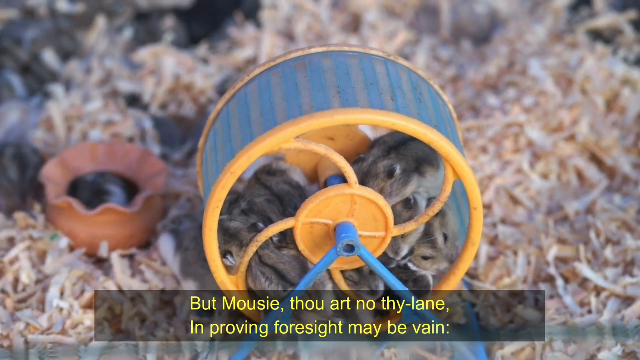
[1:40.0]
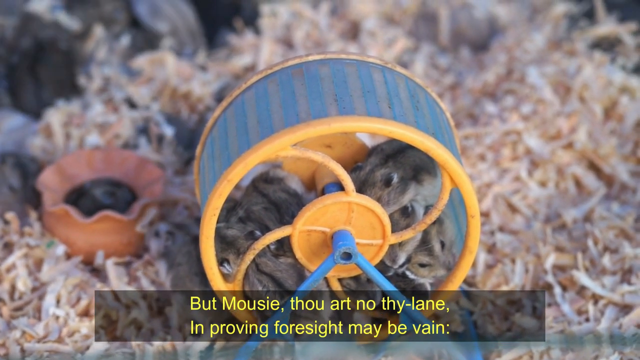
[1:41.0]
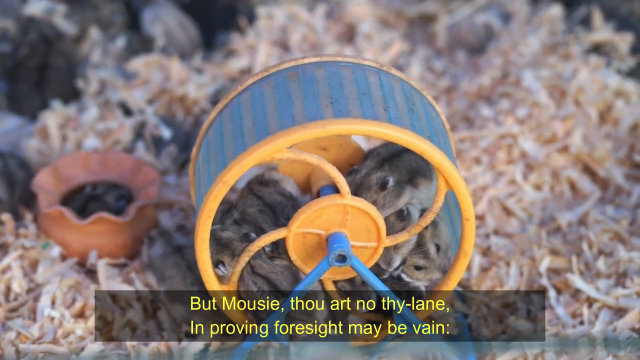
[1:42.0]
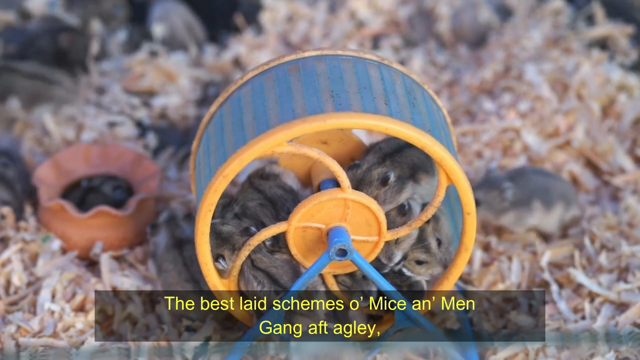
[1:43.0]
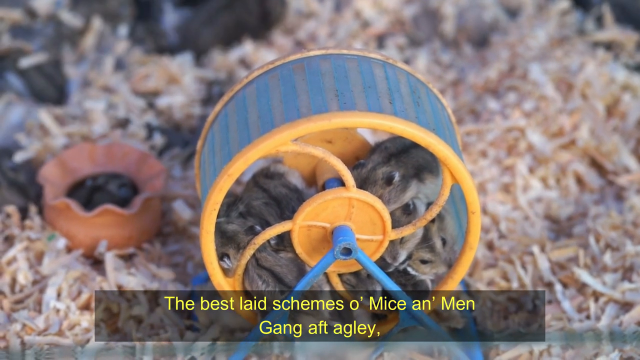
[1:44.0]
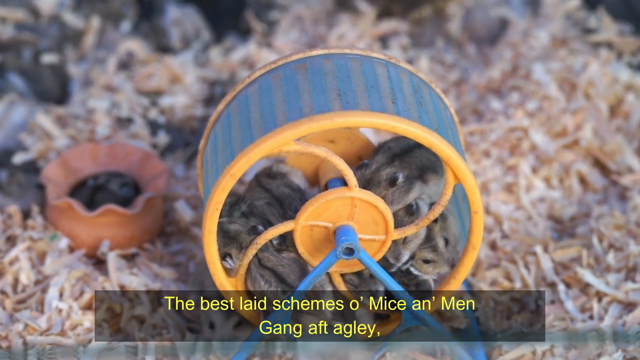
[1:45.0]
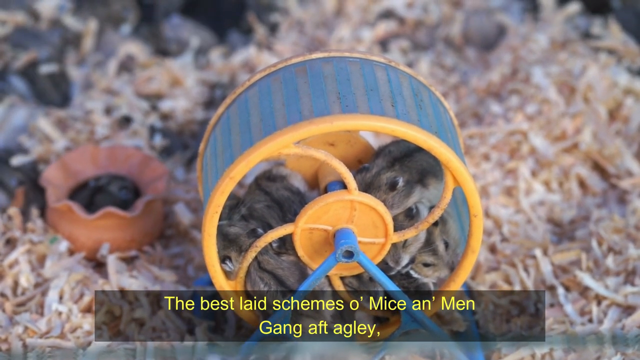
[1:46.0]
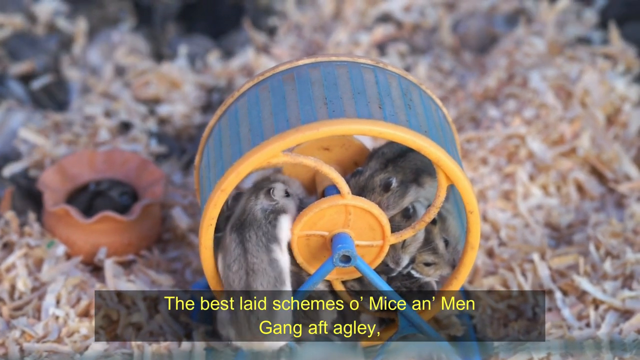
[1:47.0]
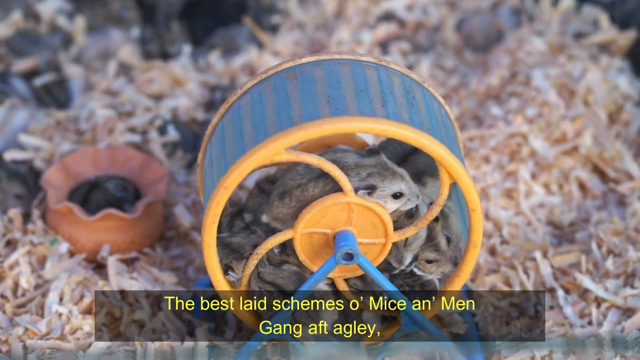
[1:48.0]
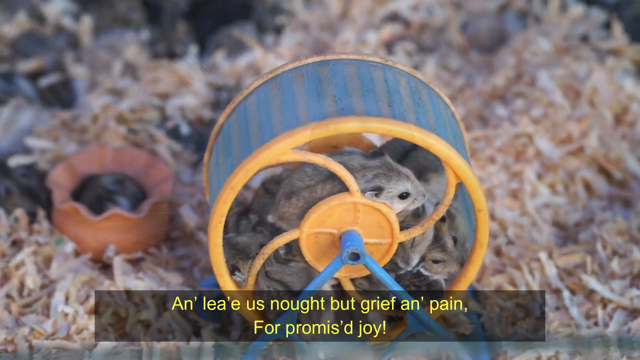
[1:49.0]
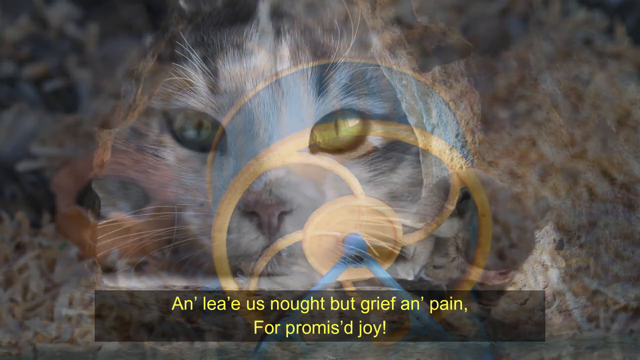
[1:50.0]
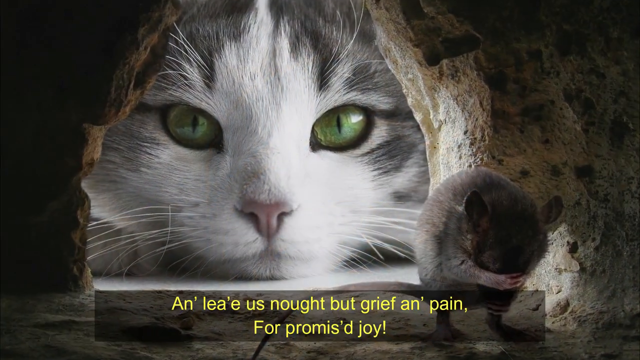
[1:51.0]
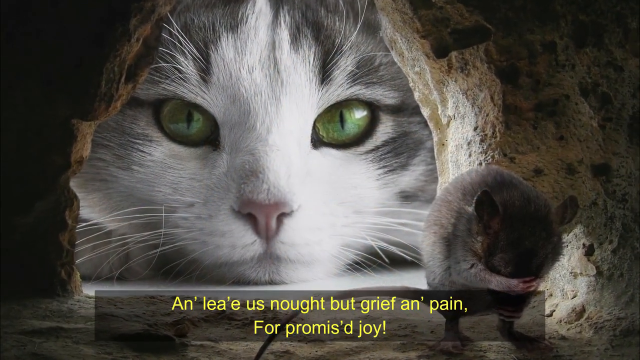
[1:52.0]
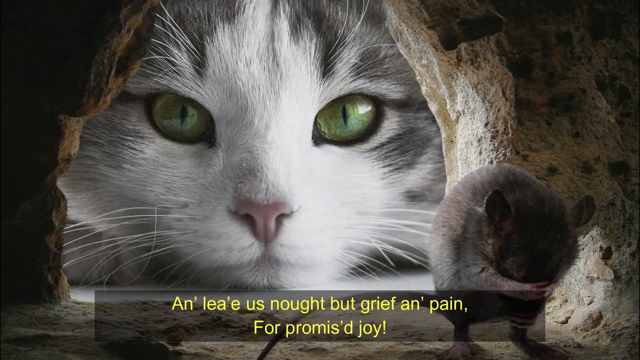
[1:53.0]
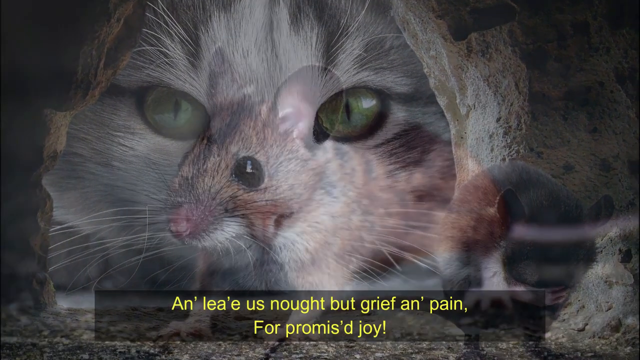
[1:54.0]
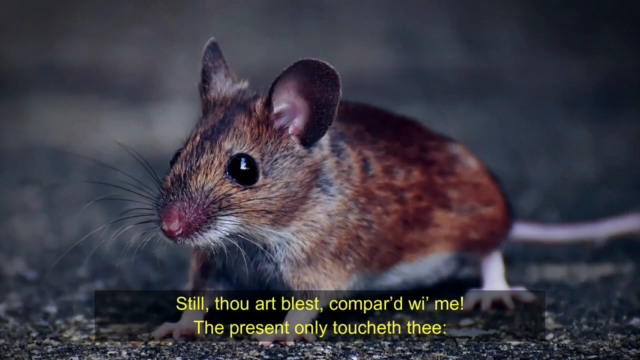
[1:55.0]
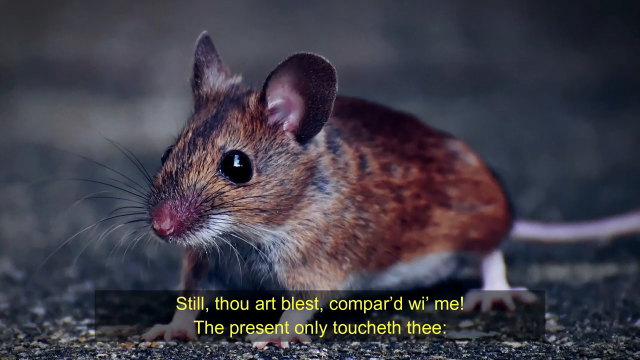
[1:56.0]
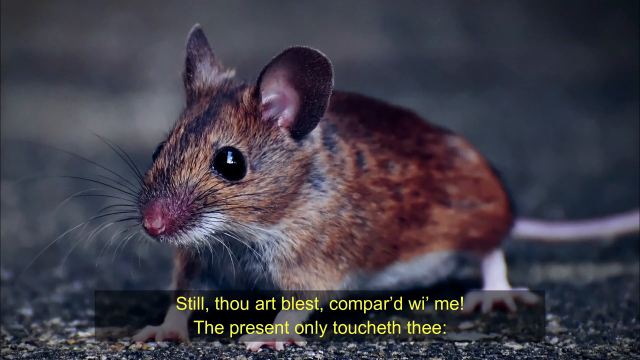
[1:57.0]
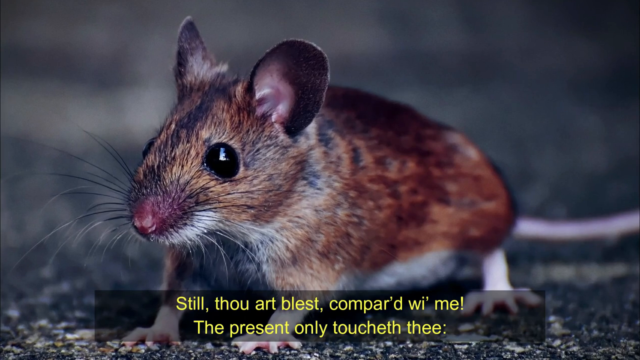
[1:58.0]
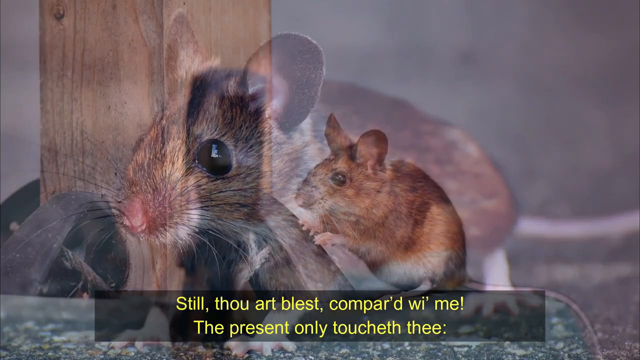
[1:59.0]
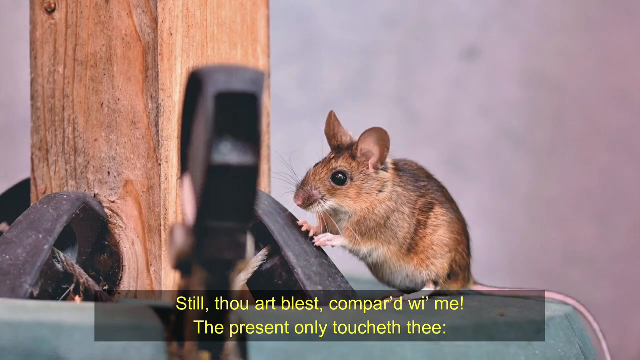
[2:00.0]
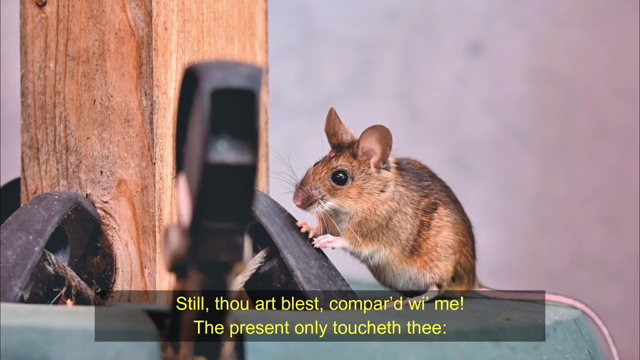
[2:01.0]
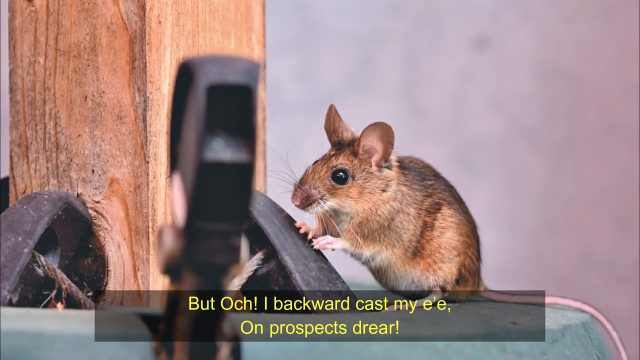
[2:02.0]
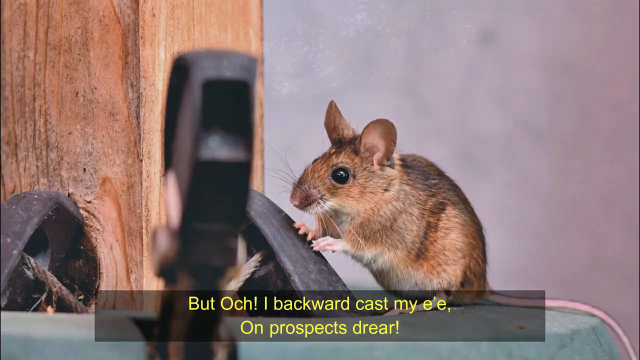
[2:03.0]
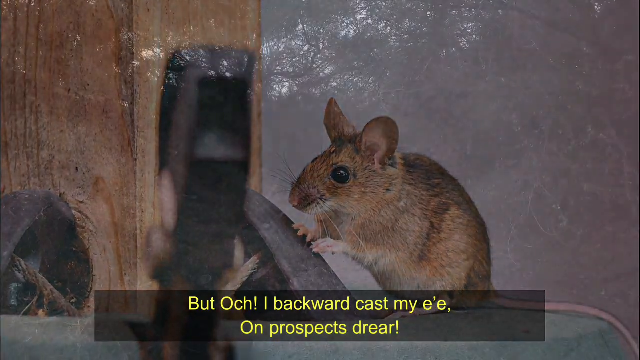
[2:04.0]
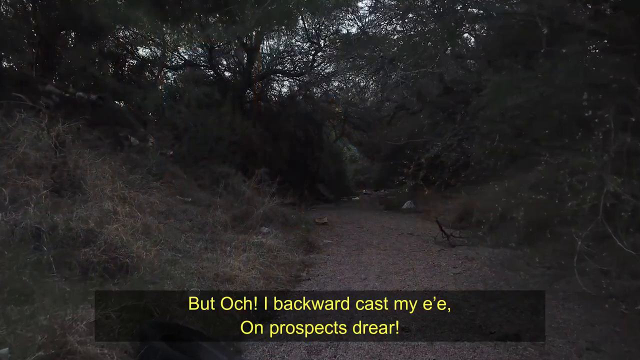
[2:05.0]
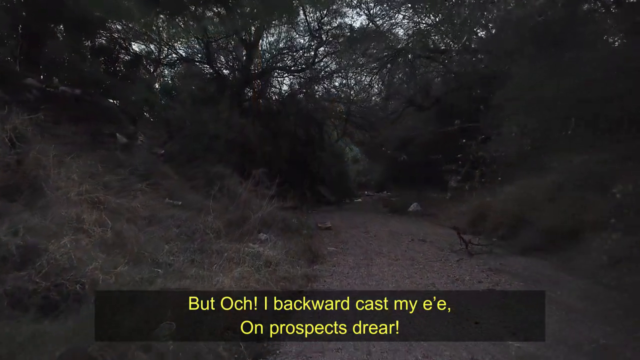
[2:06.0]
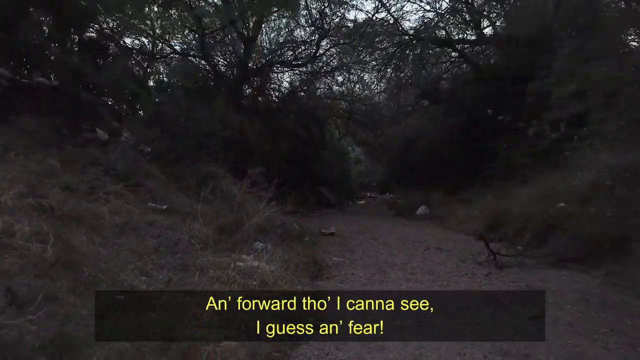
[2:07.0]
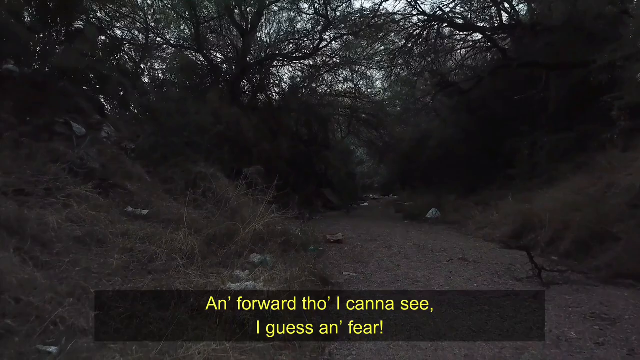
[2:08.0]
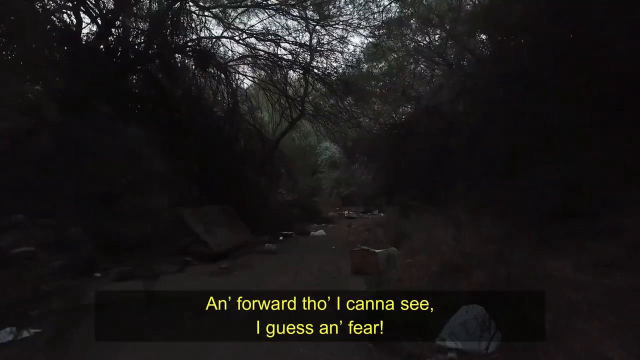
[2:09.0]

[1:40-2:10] Mice dig around all over the sawdust, and the hamster wheel is crowded with little mice, all brownish with white bellies. The text at the bottom of the screen reads "the best laid schemes of mice and men, gang aft agley." A mouse kind of runs around the side of the wheel and jumps in through an opening in the back, on top of the crowd of mice inside. The words change to "an' lea'e us nought but grief an' pain for promis'd joy." The image switches to a mouse toward the front of the screen that looks like it is cleaning its face with its paws, inside a hole in something unclear, possibly a wall or a rock. On the other side only a cat's face is visible, apparently mostly white in the center and gray around the edges, or a gray tabby, with bright green eyes; it lies with its face flat to the floor, looking in through the hole at the mouse, as the camera sort of pans in. Next comes a close-up of a brown field mouse on a dark background, with the text "still thou art blessed compared with me the present only toucheth thee." Then a field mouse is perched on some kind of plastic material that looks attached to a wooden post, and the text reads "och backward cast my e'e on Prospect's Drear." The image changes to a very dark walking path in a wooded area, with overgrown bushes and grass up the side, twigs lying on the path along with what may be trash, and trees growing over the top of the path. The words on screen read "And forward though I cannot see, I guess, and fear," and the camera continues to sort of pan forward.